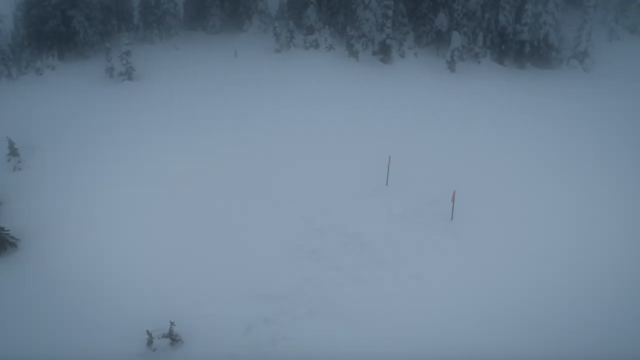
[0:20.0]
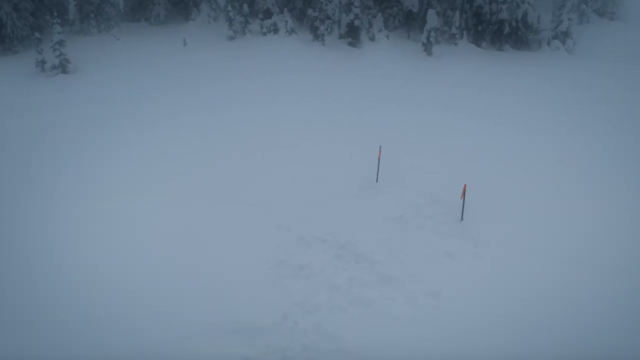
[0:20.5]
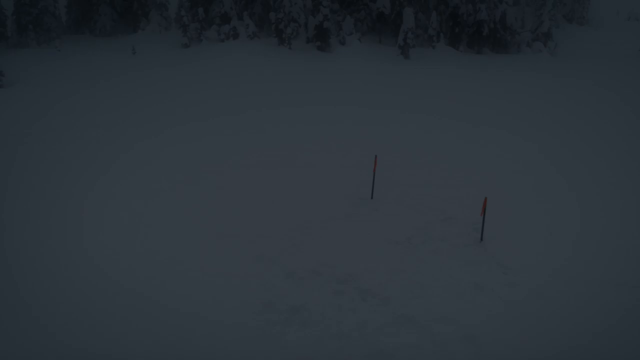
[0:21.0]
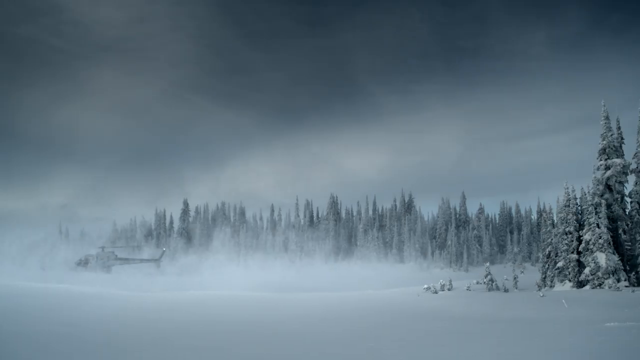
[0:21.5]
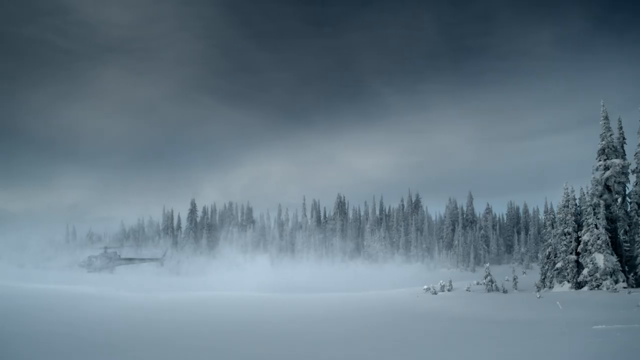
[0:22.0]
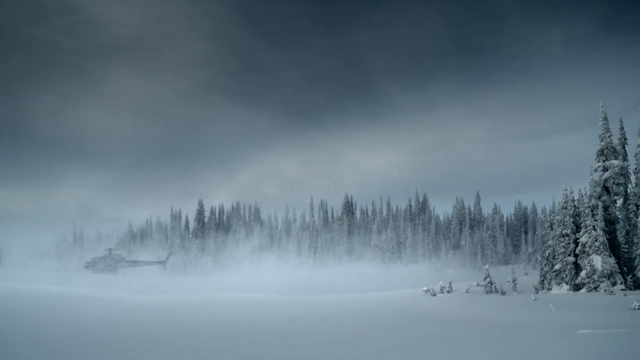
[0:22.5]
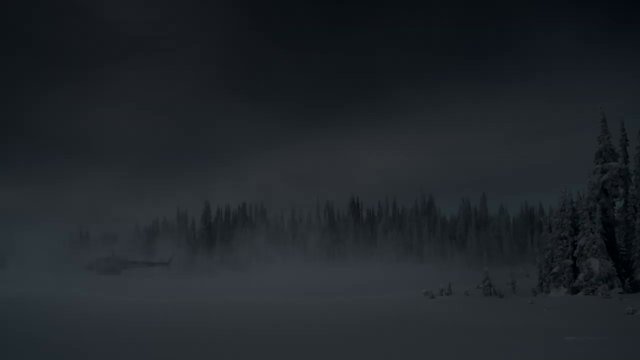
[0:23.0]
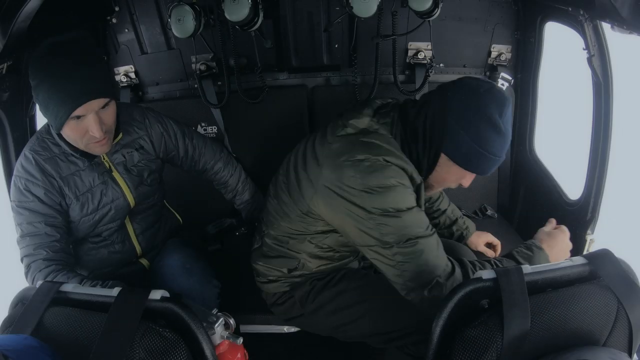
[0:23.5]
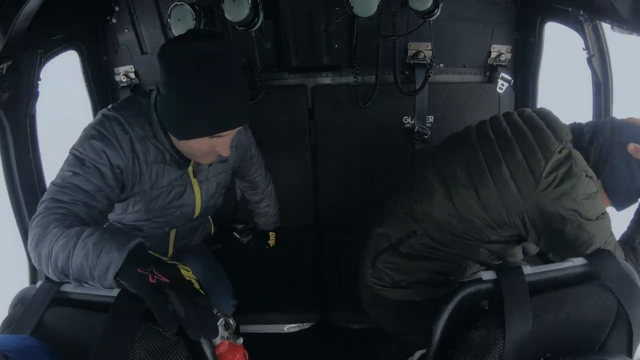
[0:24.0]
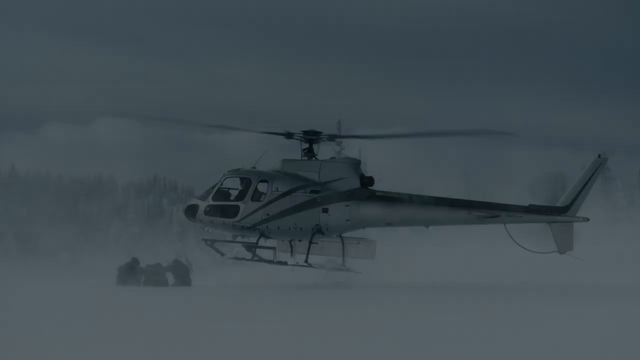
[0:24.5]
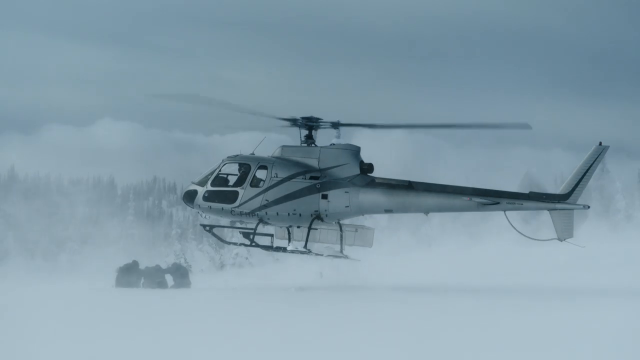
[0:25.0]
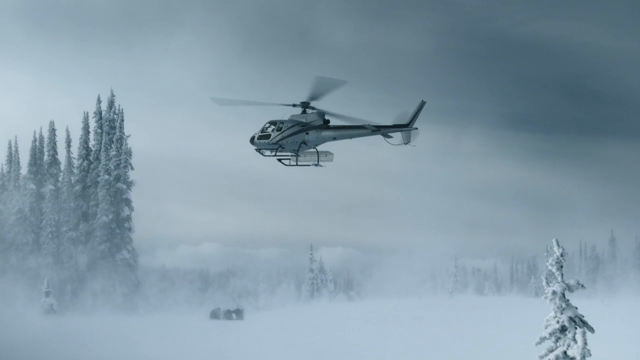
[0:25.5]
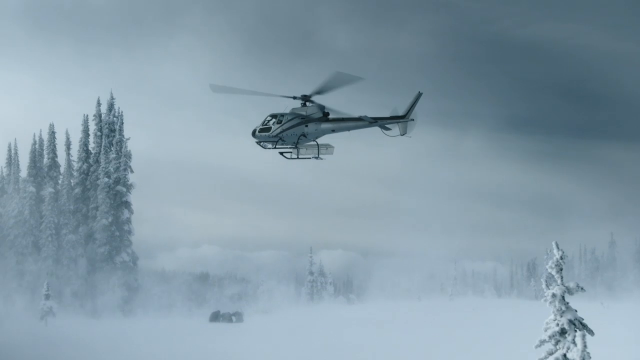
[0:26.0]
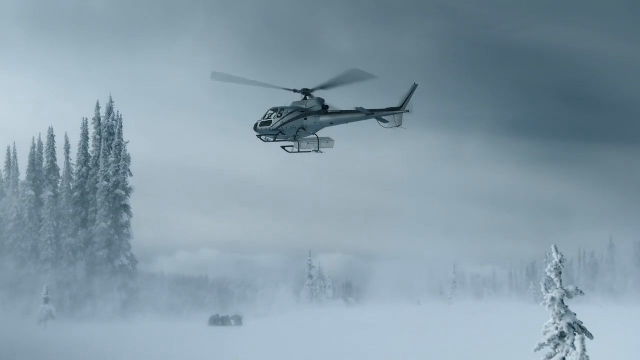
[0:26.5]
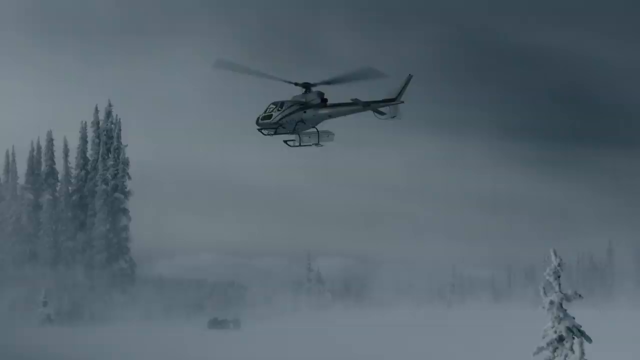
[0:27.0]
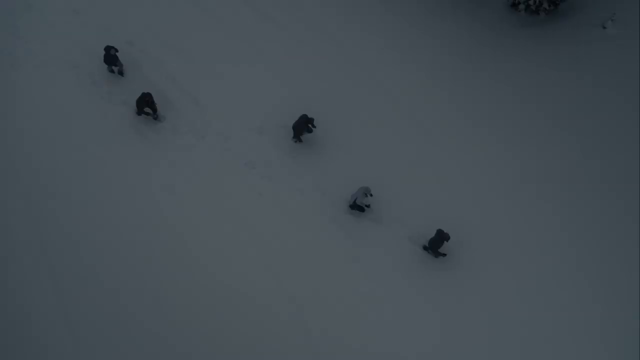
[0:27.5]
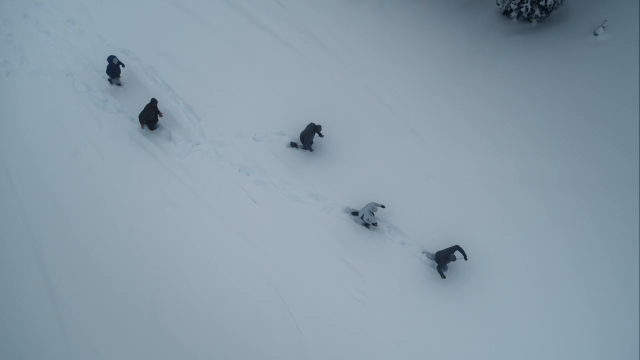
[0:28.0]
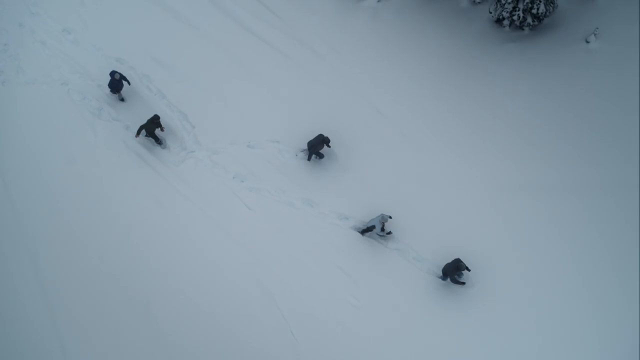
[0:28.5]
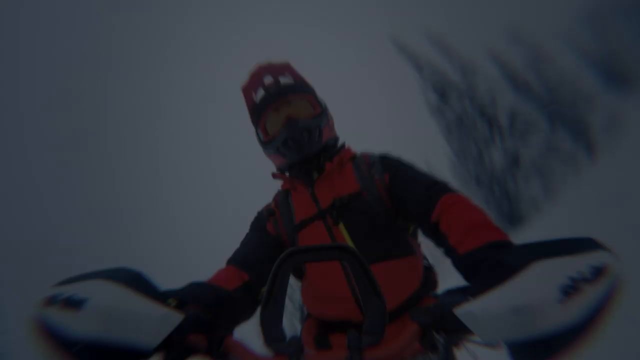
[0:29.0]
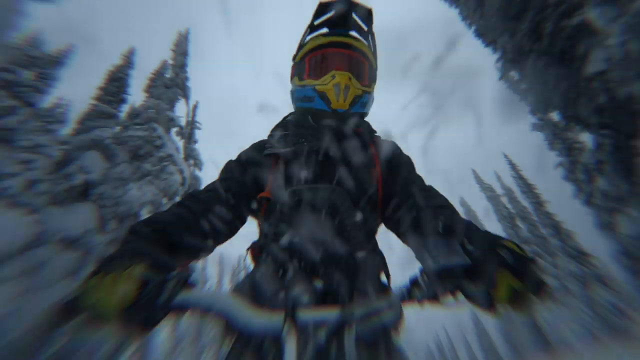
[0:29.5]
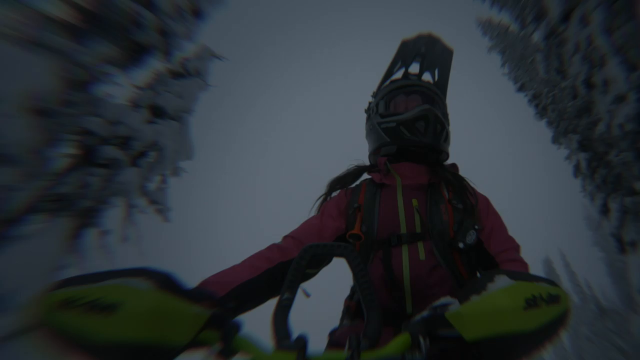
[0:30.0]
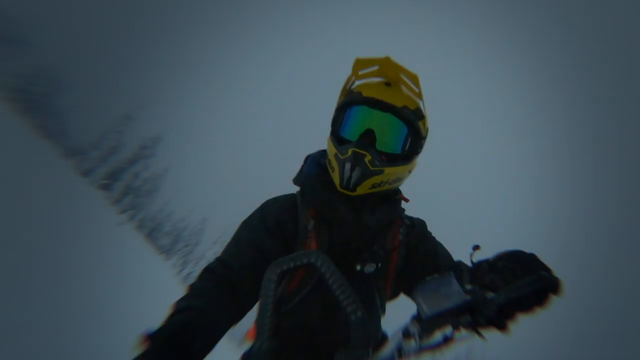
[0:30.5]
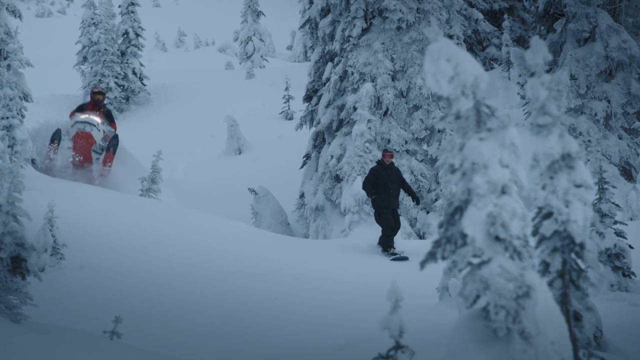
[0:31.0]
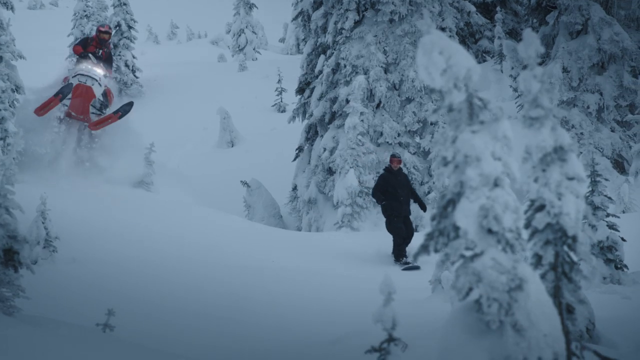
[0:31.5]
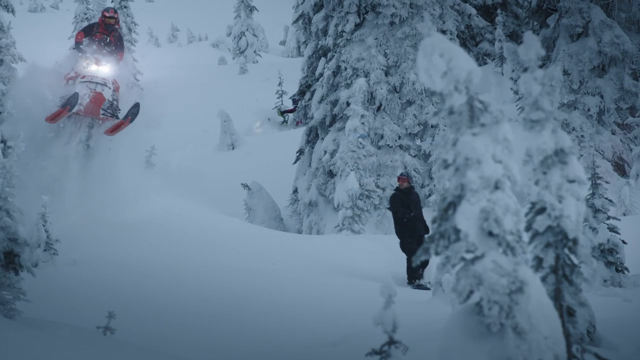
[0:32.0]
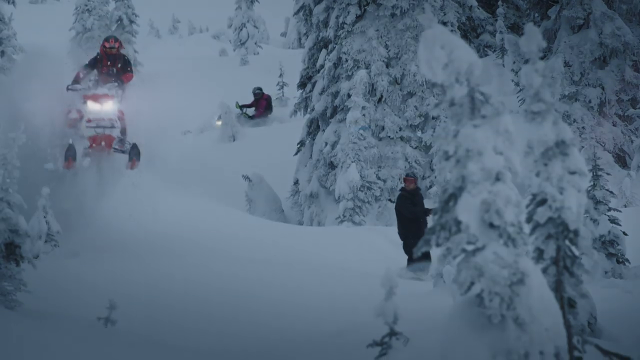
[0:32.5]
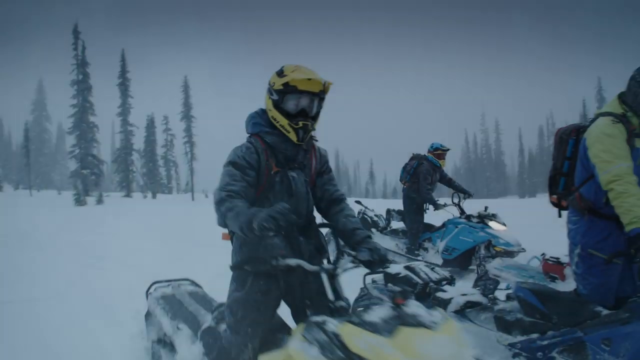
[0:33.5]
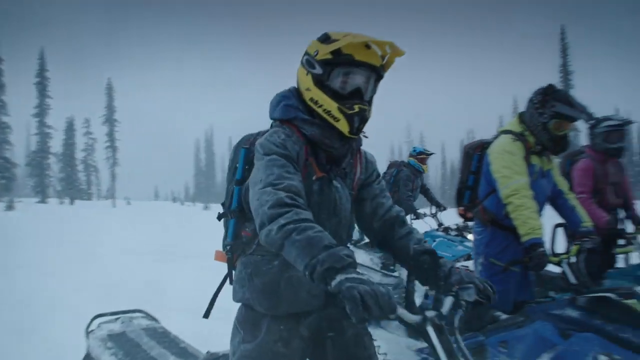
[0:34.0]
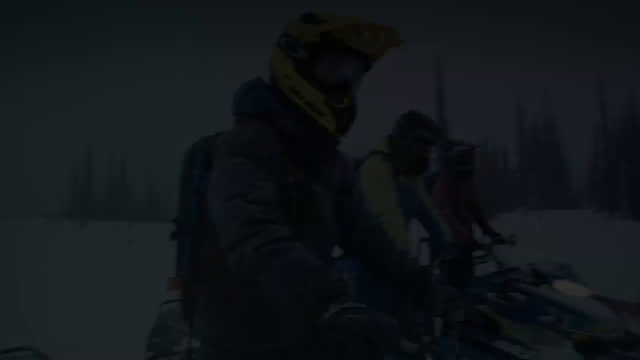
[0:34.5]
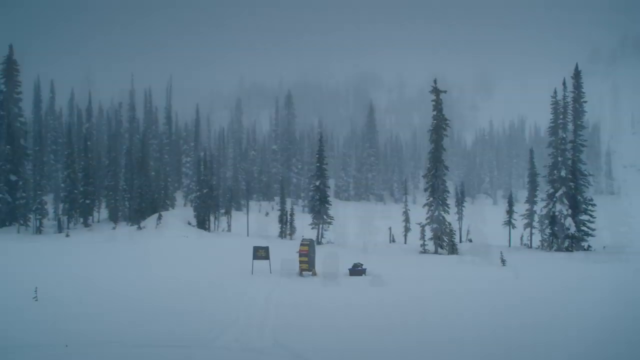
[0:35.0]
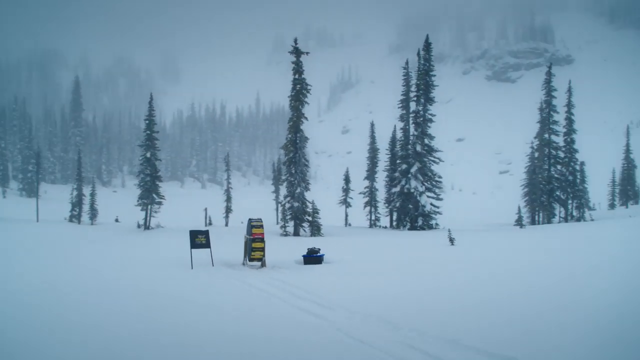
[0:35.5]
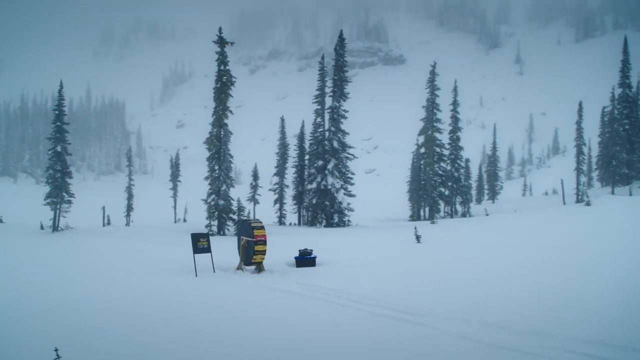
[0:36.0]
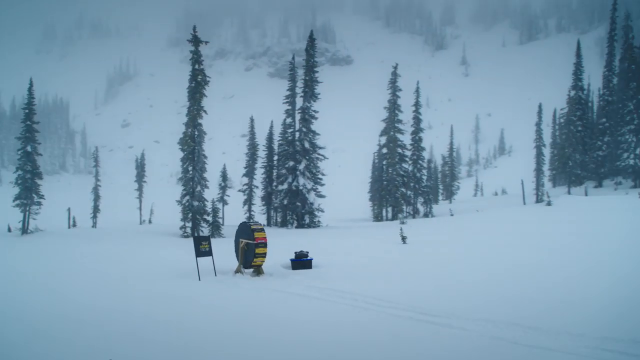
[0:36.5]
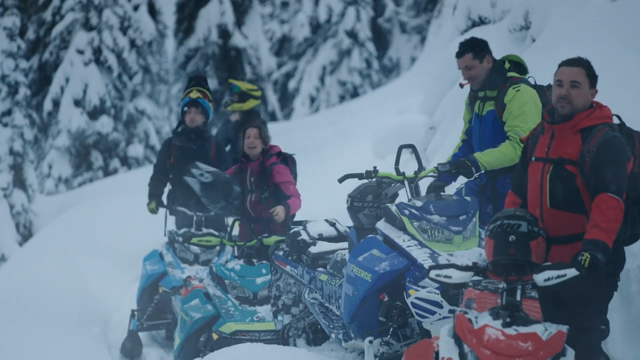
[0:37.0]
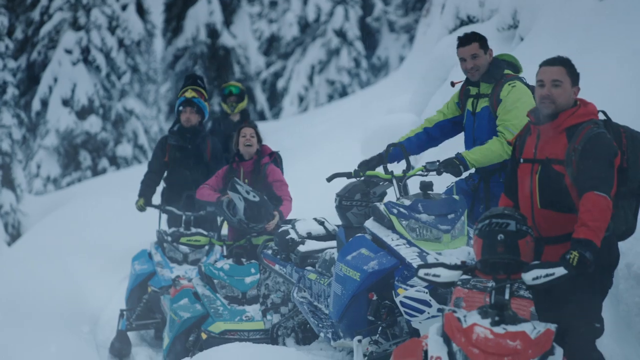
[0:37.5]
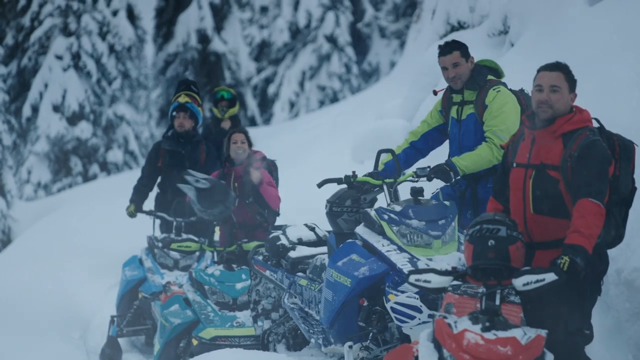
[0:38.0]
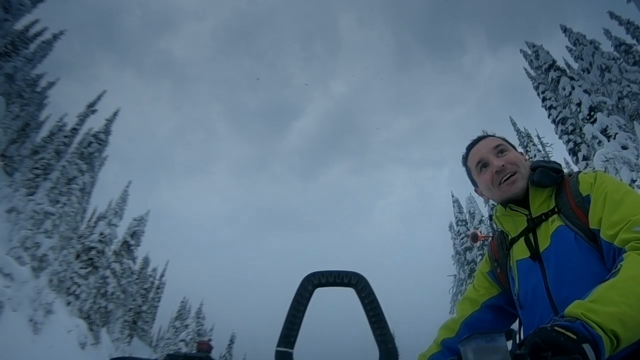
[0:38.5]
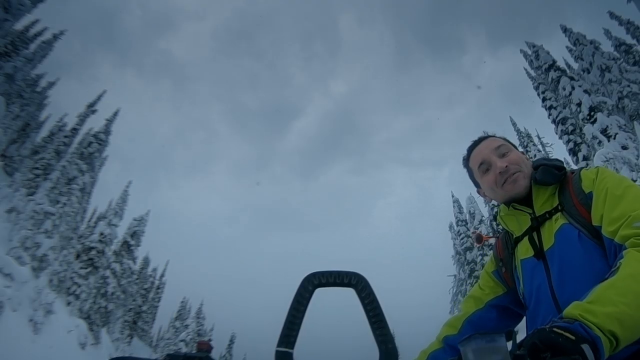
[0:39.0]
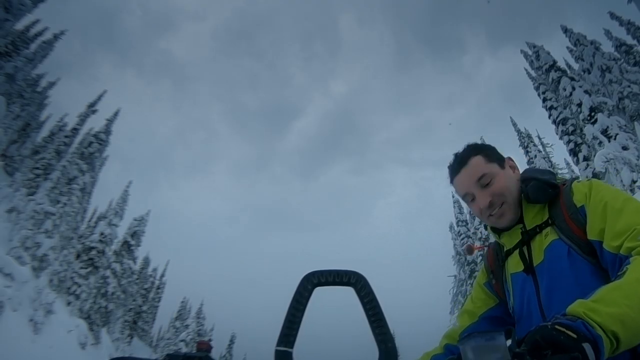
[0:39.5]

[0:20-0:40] Everyone jumps out of the helicopter, walks over to the bikes and races fast down the hill. They seem to be going through an obstacle course, with small flags set in the snow. The riders look happy and excited and appear well-trained and experienced. The area is remote and surrounded by tall, large trees, and the snow is deep enough that people sink into it a bit when they walk through it.